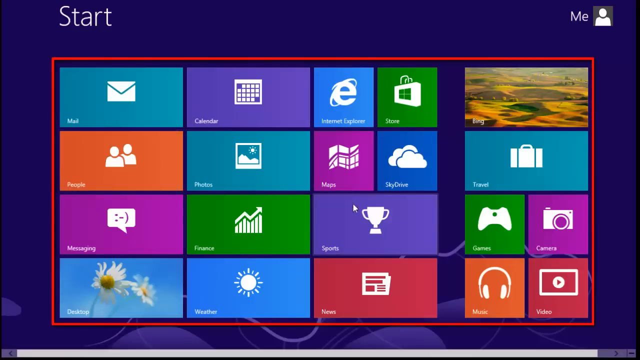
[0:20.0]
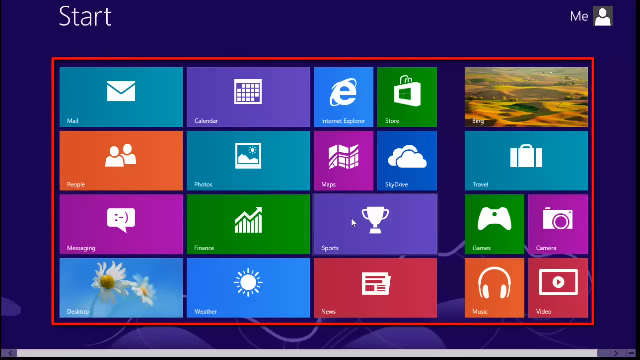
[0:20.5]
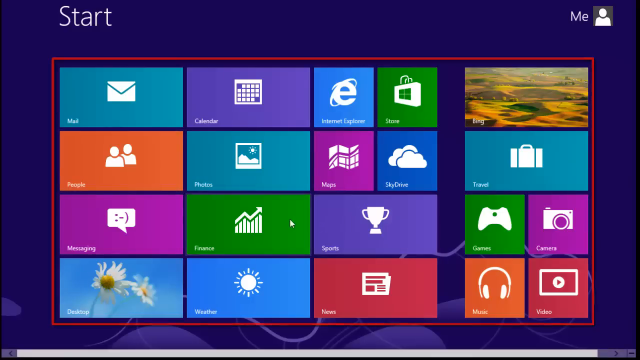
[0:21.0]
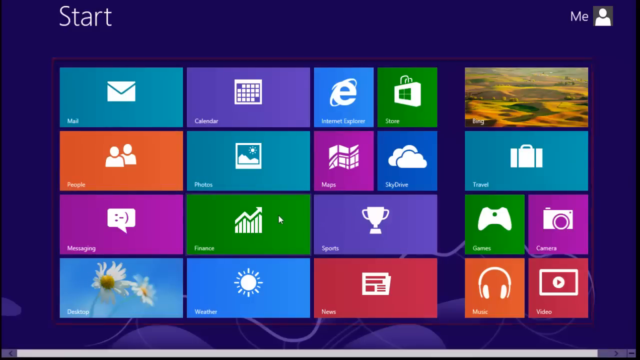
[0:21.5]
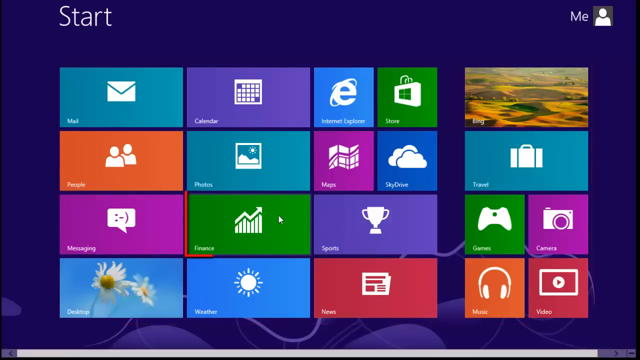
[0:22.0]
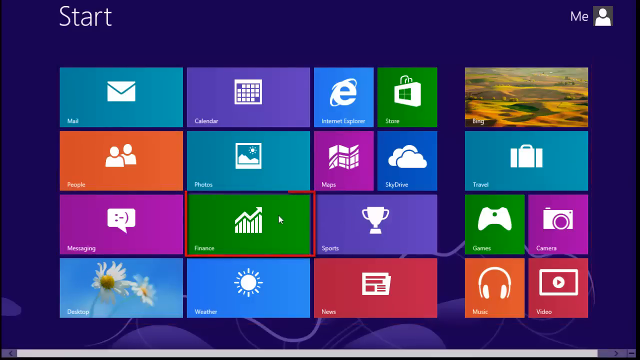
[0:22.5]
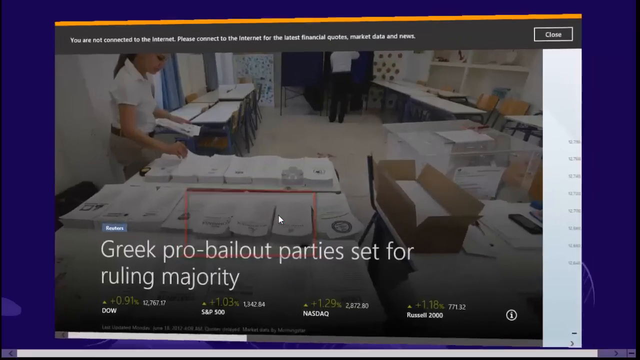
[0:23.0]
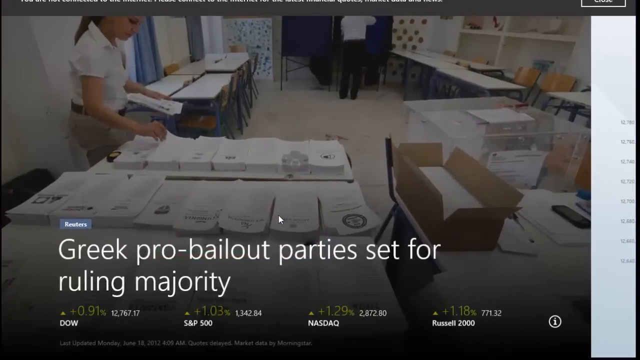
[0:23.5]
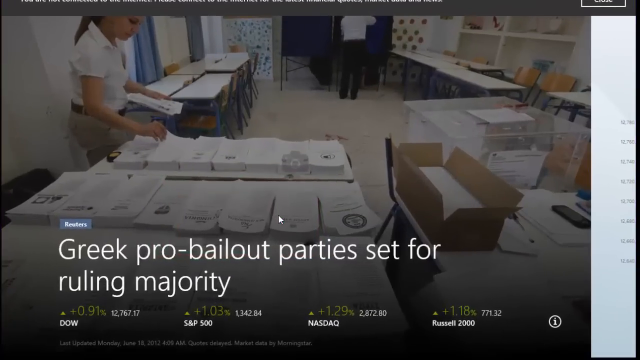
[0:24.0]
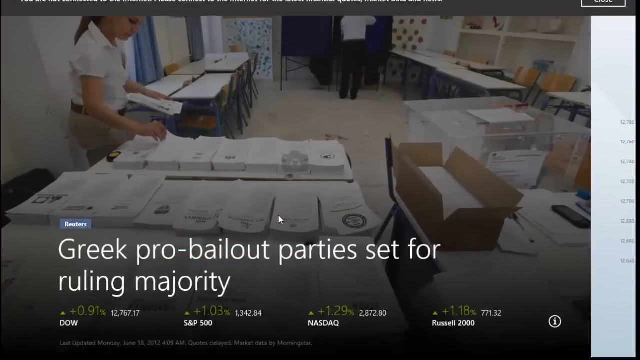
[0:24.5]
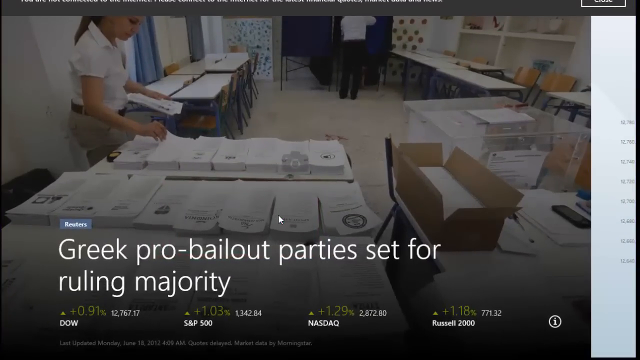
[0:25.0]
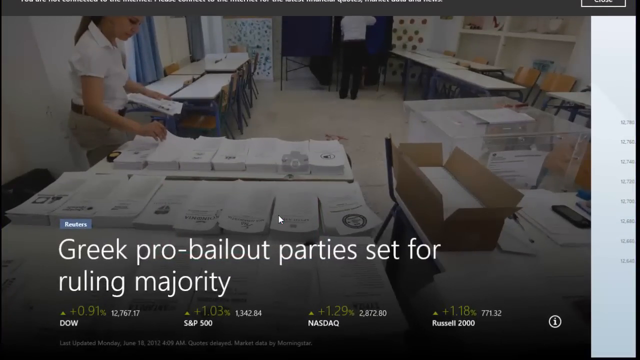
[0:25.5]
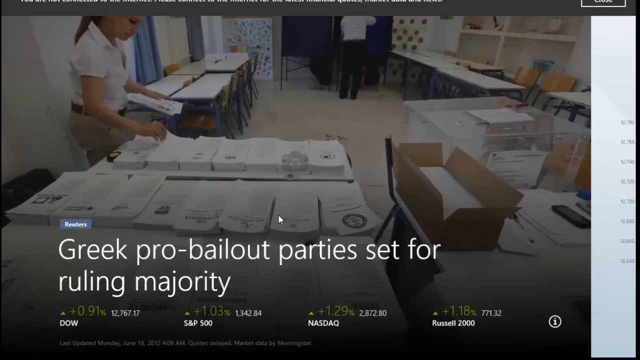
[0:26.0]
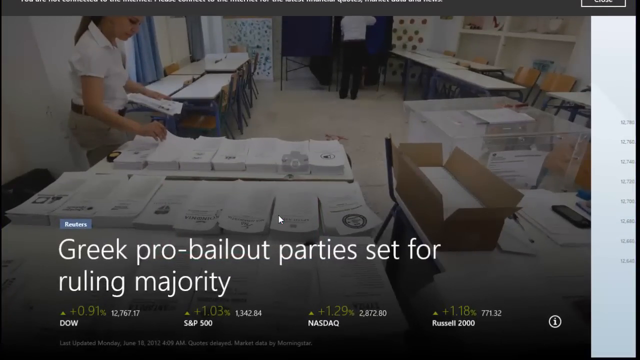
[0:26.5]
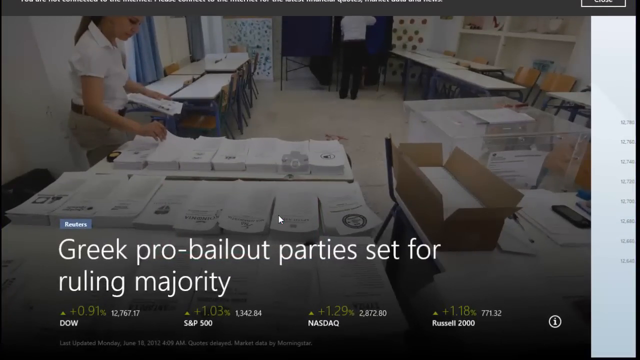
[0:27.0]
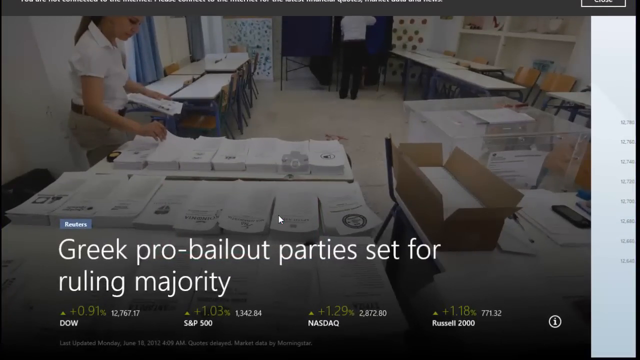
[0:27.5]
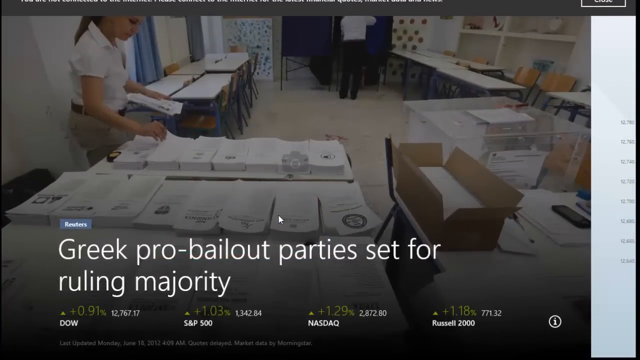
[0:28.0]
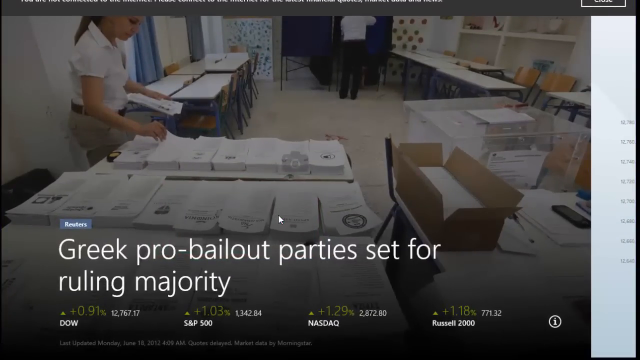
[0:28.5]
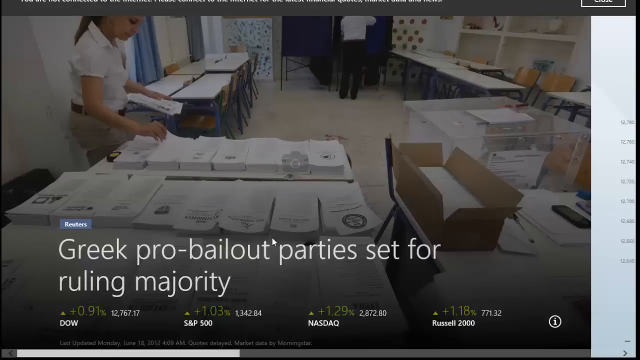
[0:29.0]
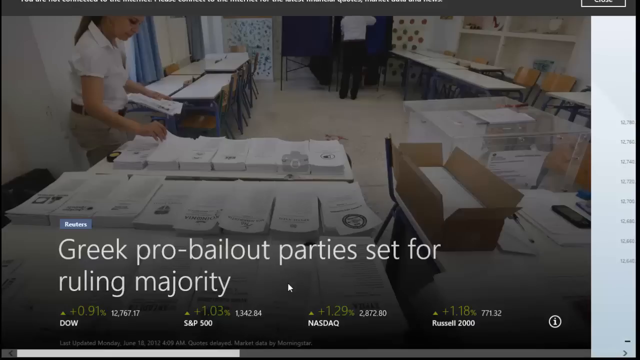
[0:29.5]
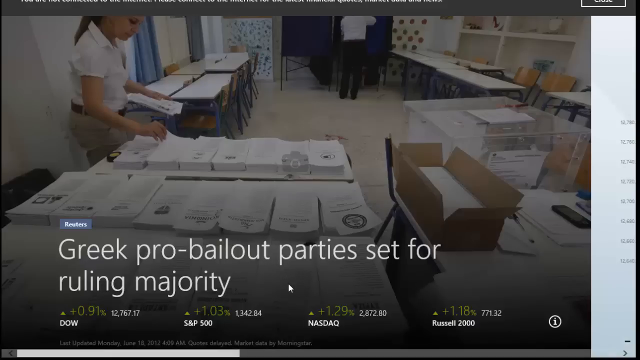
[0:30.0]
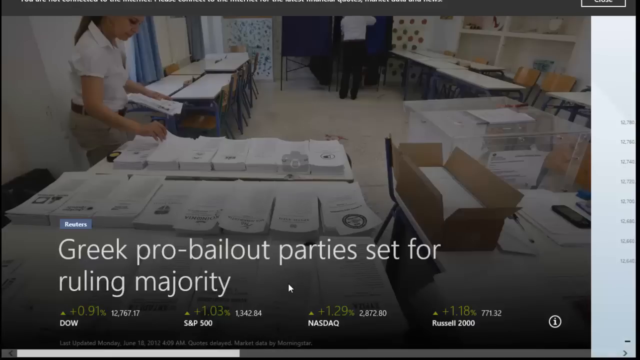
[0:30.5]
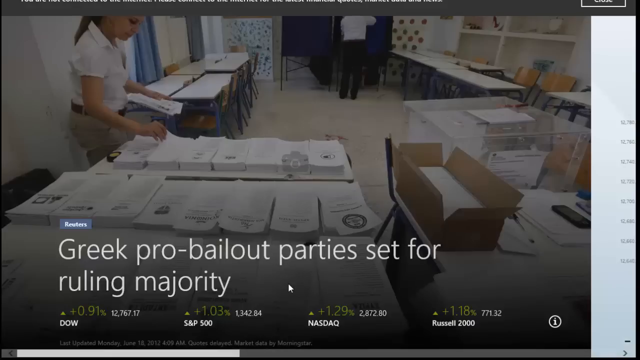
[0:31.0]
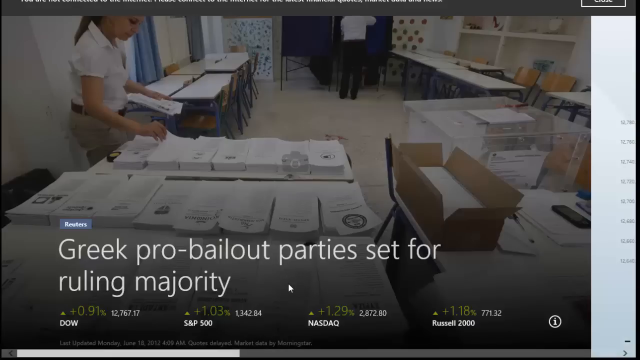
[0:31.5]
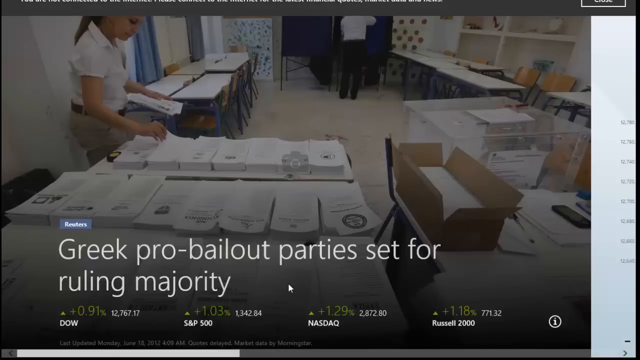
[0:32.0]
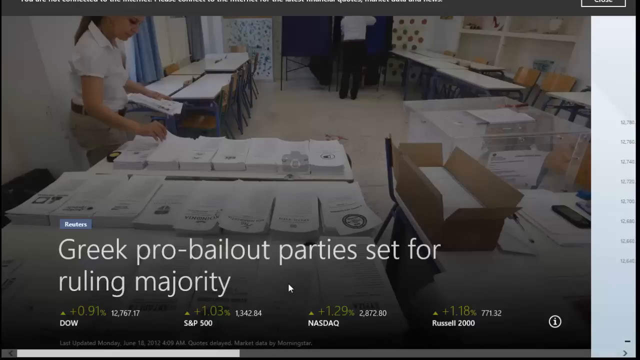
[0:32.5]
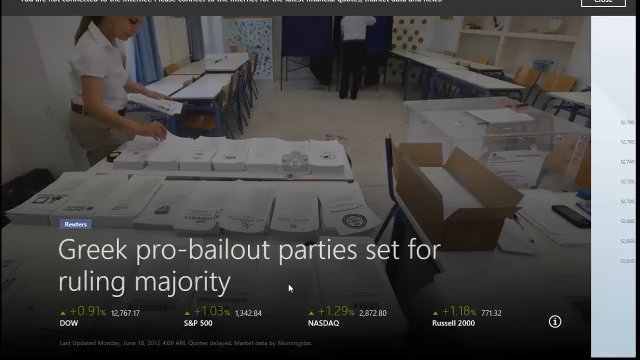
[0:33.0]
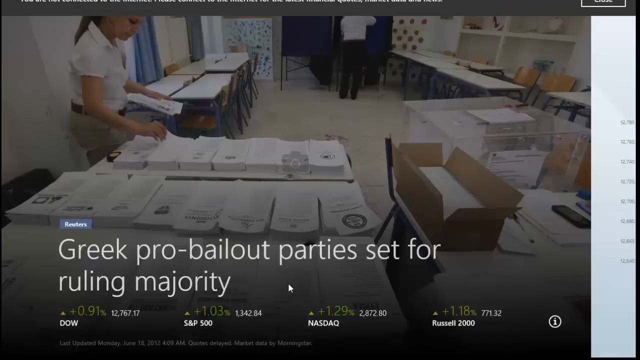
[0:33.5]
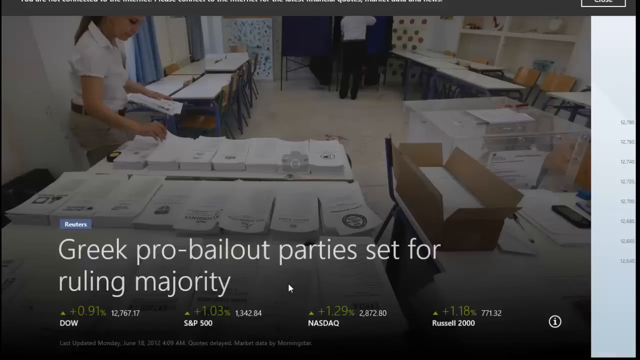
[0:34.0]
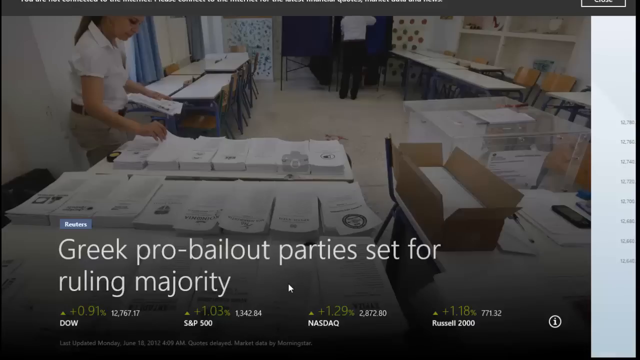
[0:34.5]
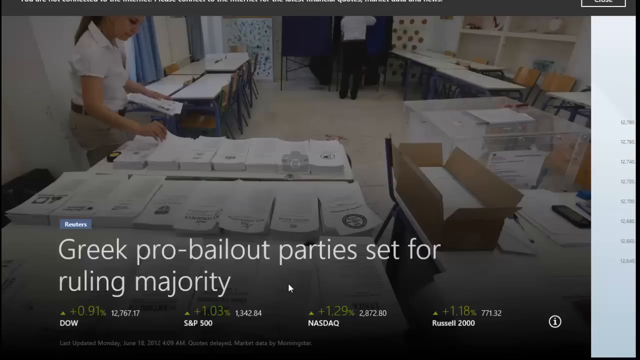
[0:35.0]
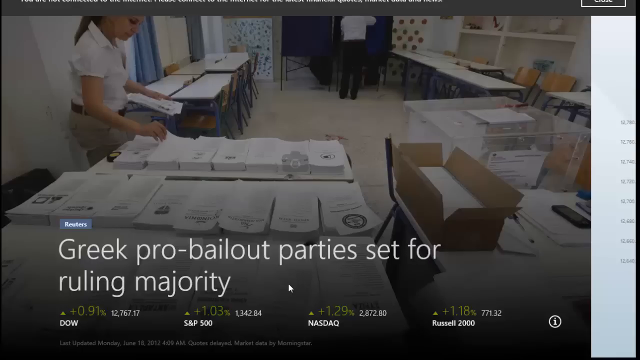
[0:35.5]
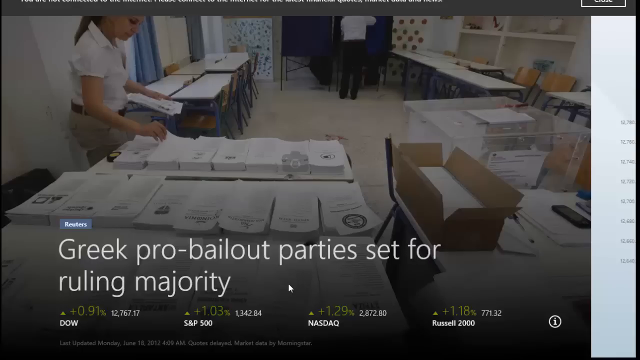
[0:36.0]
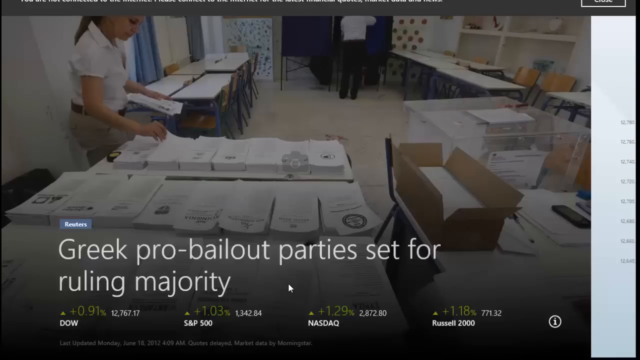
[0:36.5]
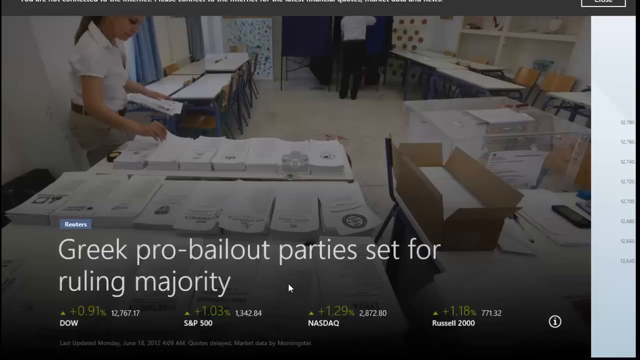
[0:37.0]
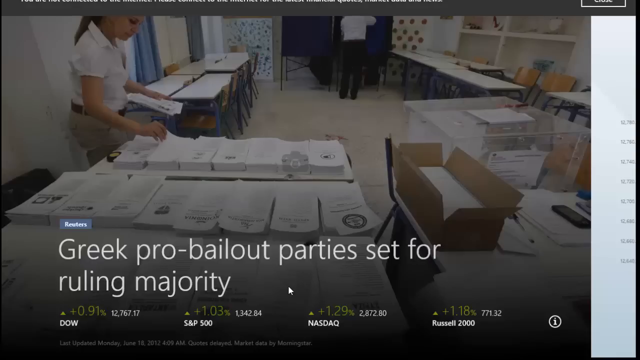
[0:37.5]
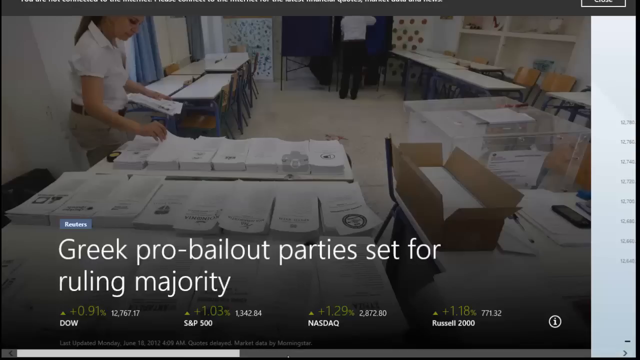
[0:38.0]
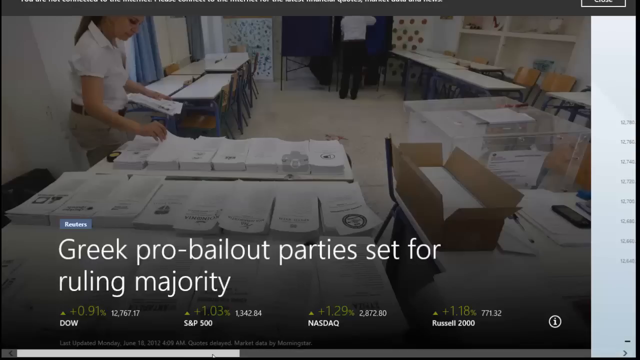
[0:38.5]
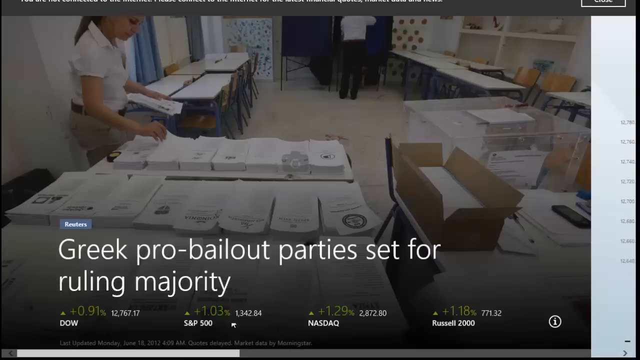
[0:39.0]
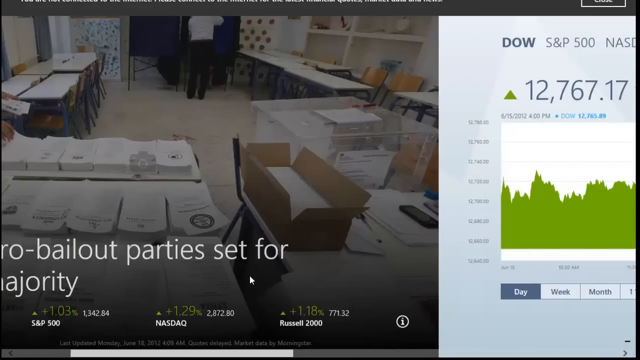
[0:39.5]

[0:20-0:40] On the Windows menu, a white cursor hovers over a purple Sports tab, then moves slightly left over a green Finance tab. A red outline begins at the top left corner of the Finance tab, moves counterclockwise around its outside, and connects again at the top left. The scene changes to a photo of a room with multiple tables, with stacks of papers on the table closest to the camera. Two people are in the room: one in the background with their back to the camera, and a woman in a white collared shirt who has her right hand on one of the stacks and is adjusting it while looking down at the papers. Green text at the bottom of the screen shows the day's stats for different stocks. The cursor moves from the middle of the screen down toward the bottom. White text on the screen reads "Greek pro-bailout parties set for ruling majority."